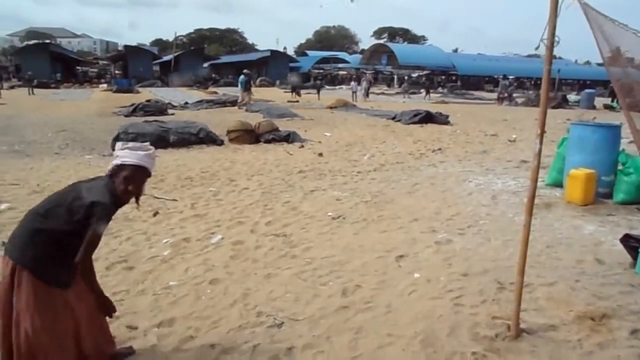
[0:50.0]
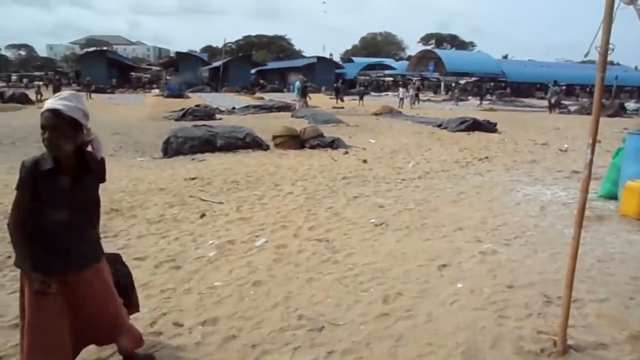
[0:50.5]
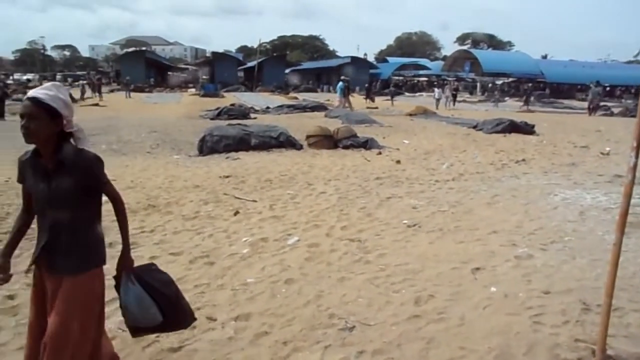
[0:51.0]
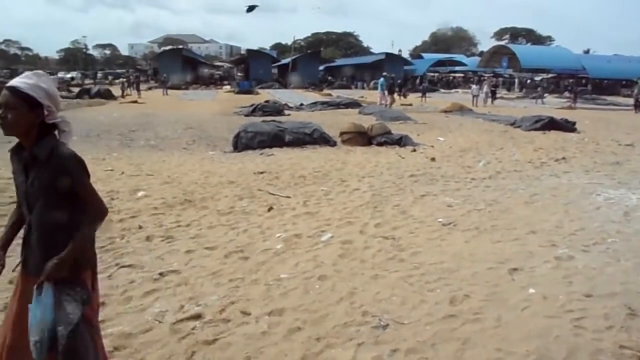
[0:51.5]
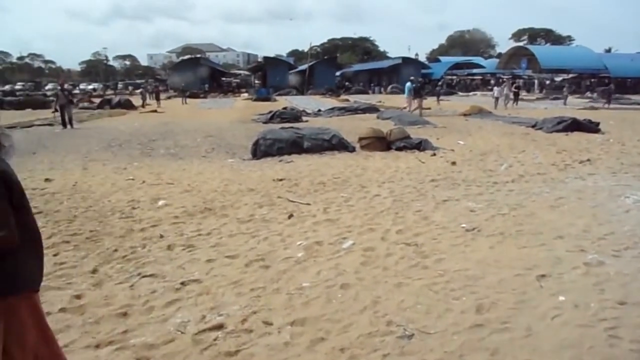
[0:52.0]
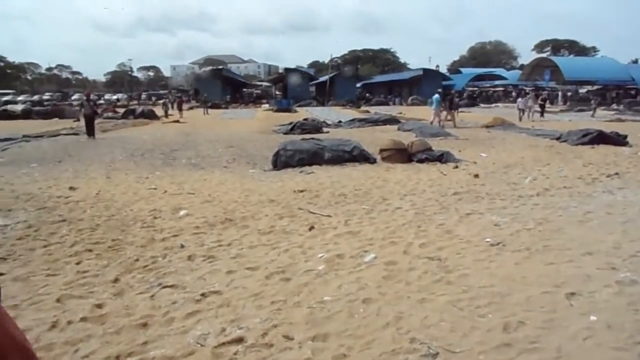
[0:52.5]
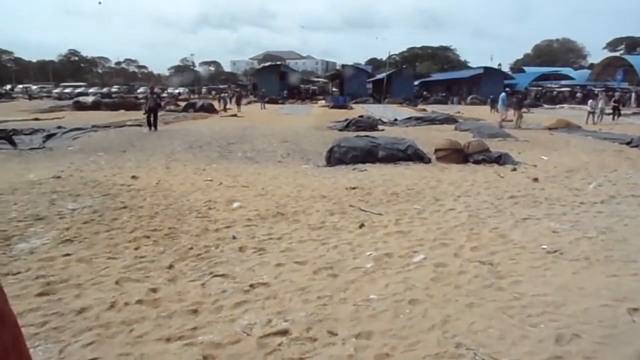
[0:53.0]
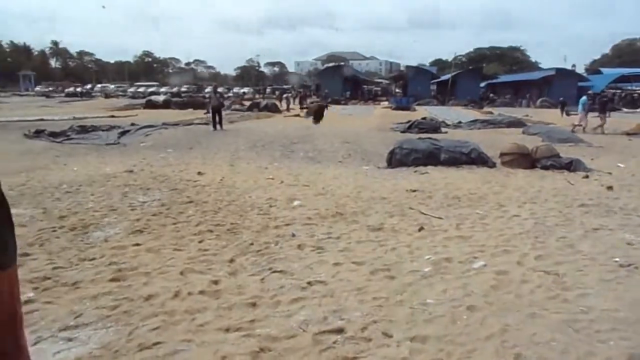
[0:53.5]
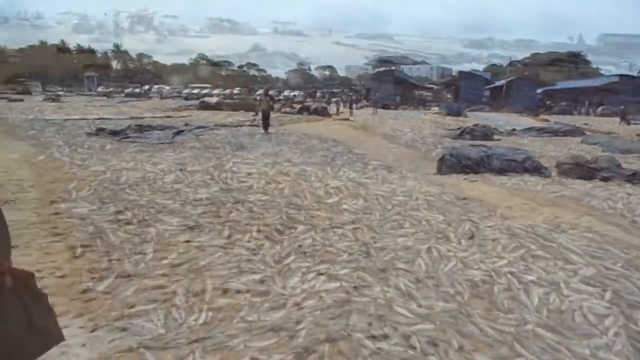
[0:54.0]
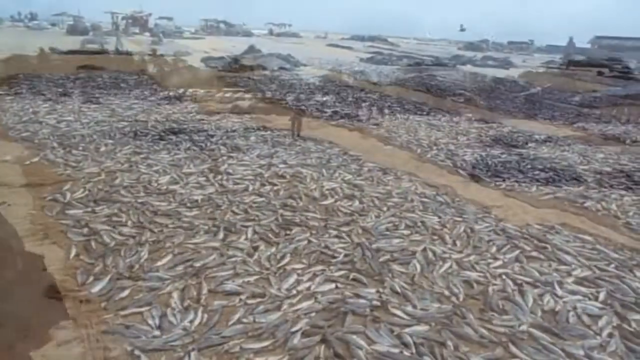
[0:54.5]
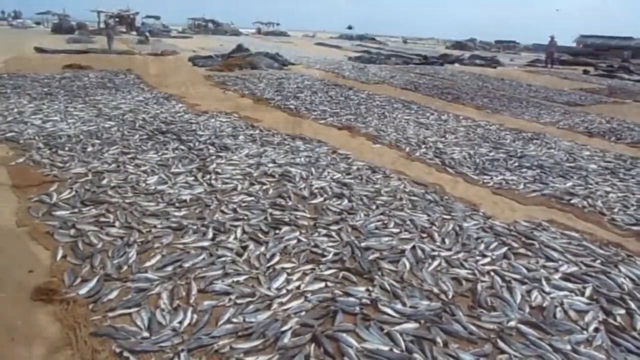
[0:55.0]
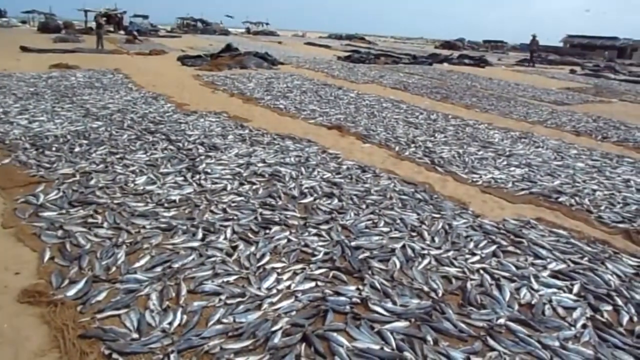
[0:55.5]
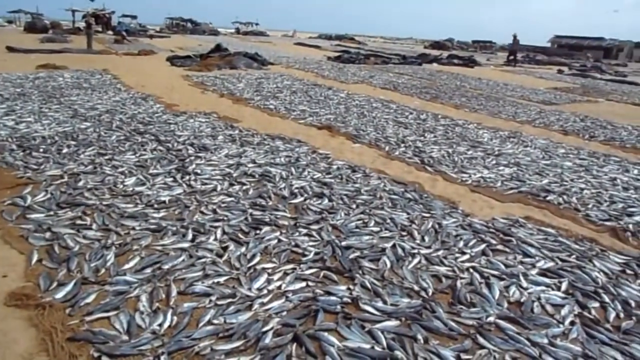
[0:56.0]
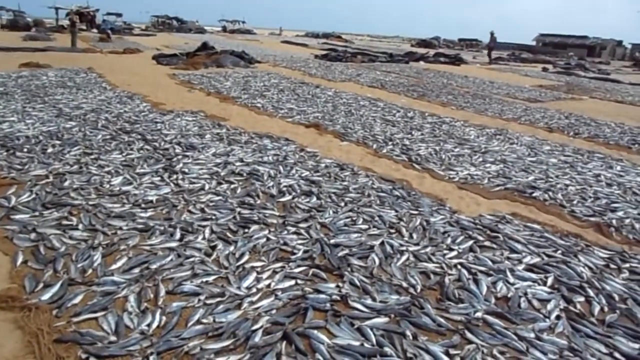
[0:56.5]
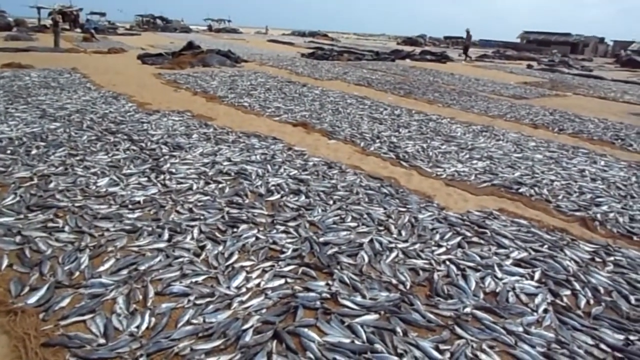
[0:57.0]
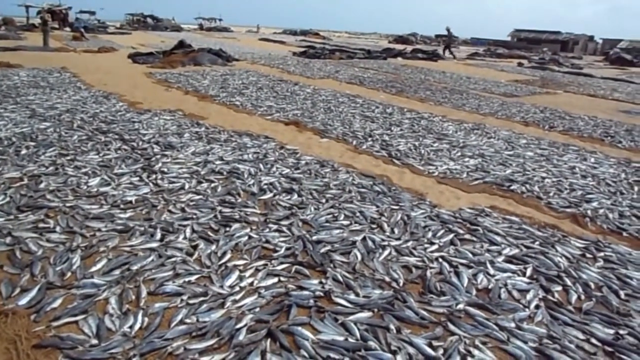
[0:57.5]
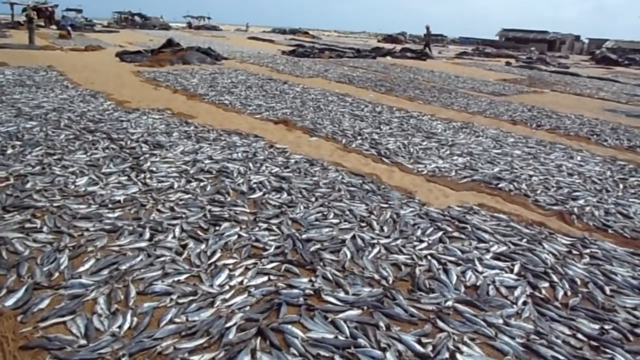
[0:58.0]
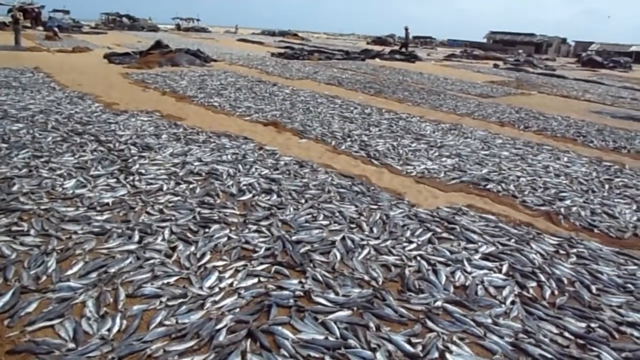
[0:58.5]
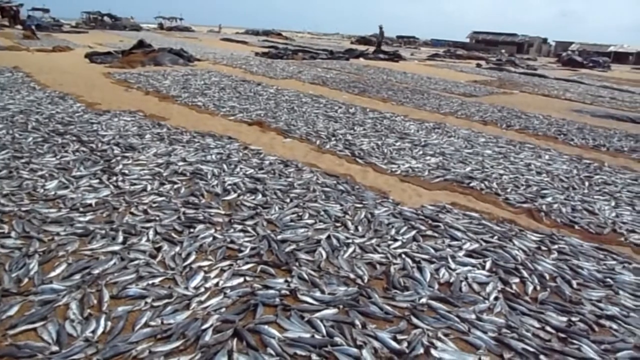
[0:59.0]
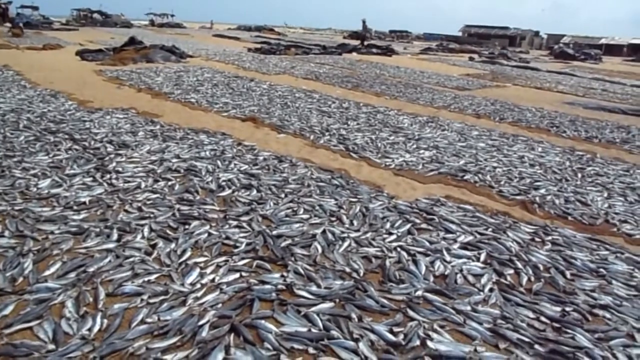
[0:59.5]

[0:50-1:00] The camera pans behind the fishing nets toward the area further inland, showing more of the beach and many people. In the distance is what looks like a very large parking lot full of cars. The scene fades to dozens of tarps laid out with thousands of fish on top of them in rows. It looks hot, and the fish appear to be drying out. They are small fish, maybe sardines or another smaller type, grayish, bluish and white under the sun, lying out in the sun. A few people walk between the rows.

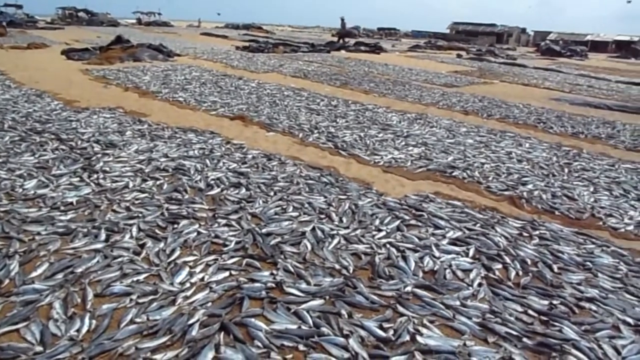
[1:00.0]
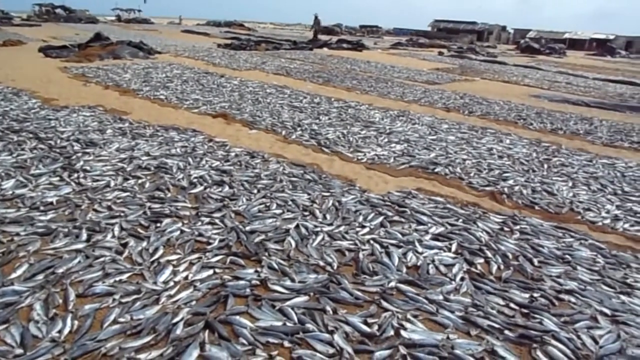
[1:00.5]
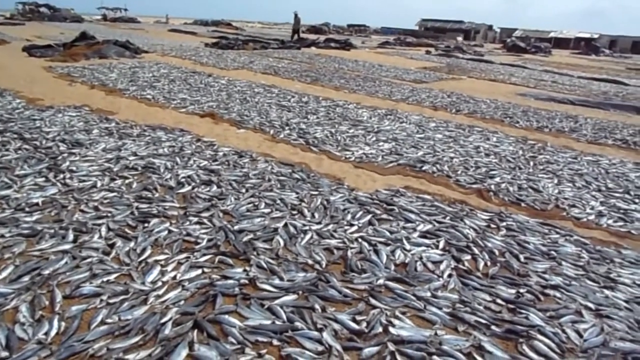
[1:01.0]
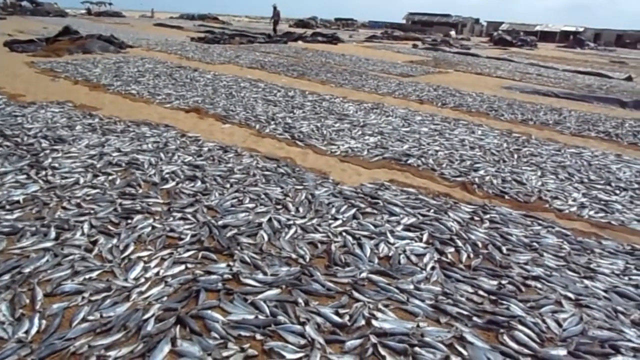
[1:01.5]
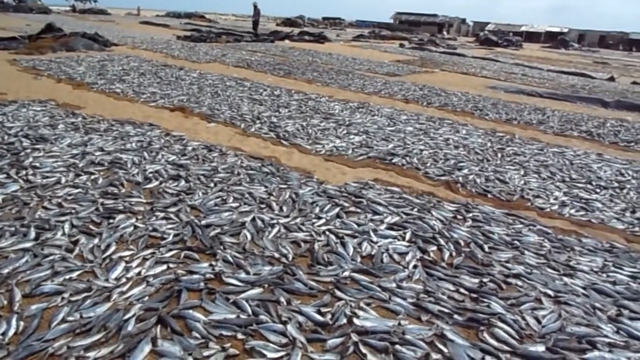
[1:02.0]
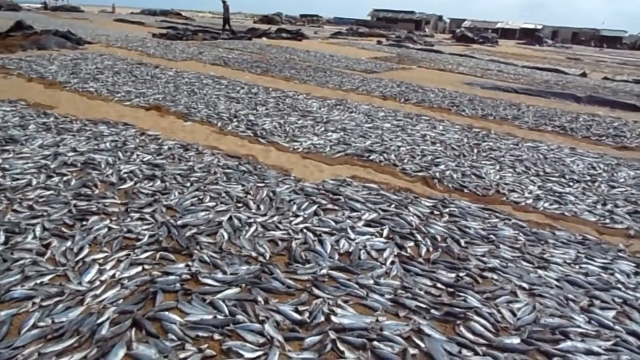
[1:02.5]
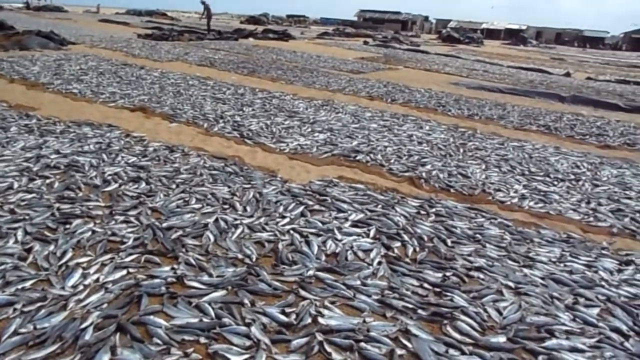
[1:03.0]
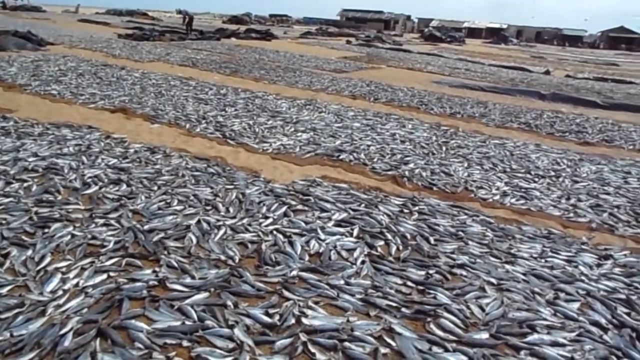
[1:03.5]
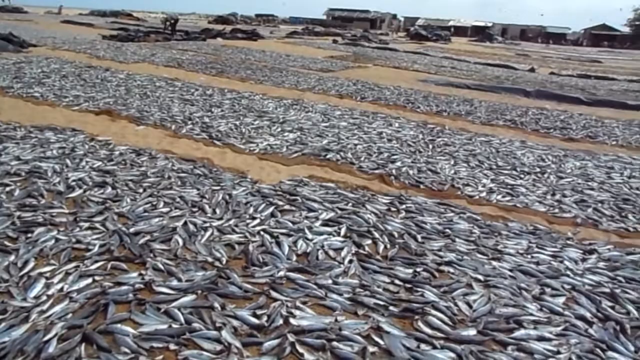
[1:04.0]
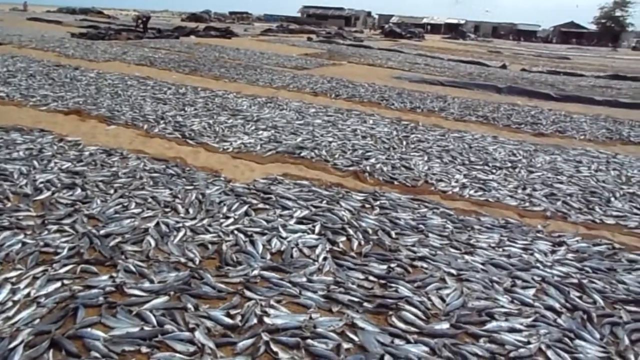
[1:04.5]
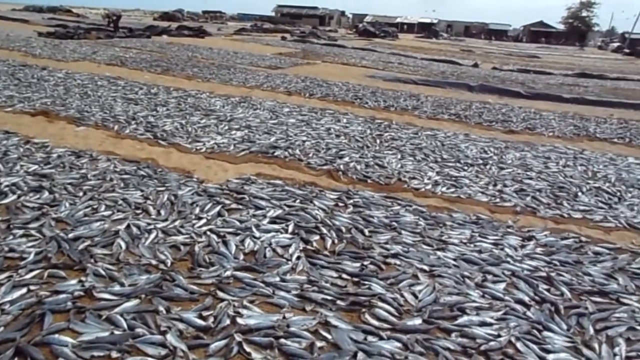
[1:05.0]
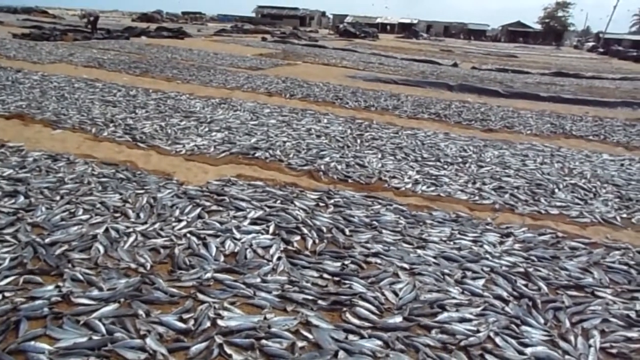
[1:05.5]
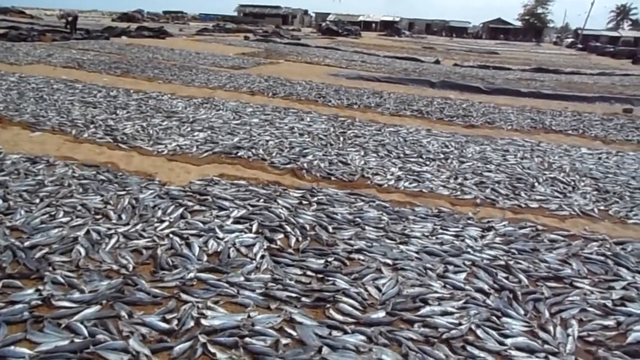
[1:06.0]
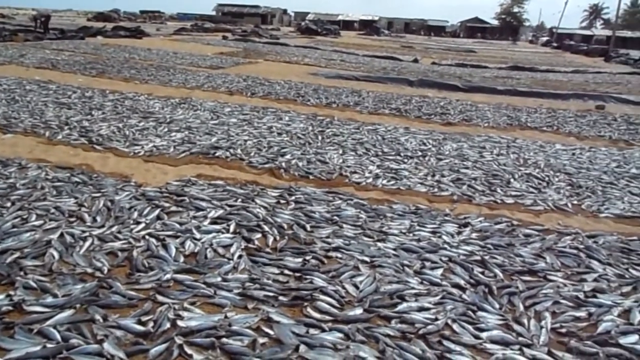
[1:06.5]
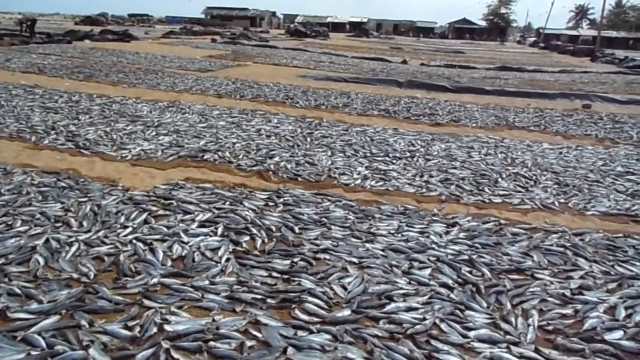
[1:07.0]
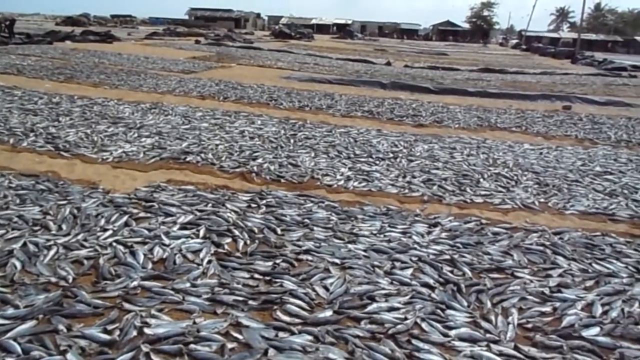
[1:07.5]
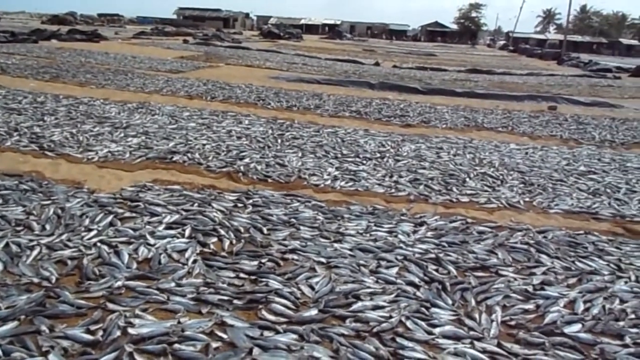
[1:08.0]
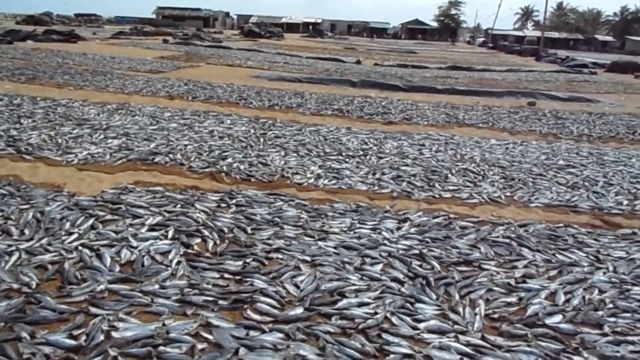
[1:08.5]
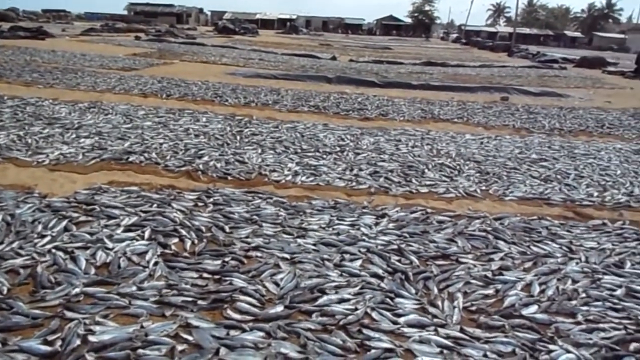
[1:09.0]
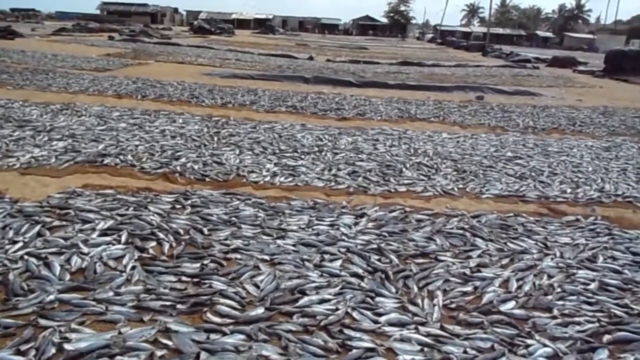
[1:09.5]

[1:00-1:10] Rows of fish lie out in the sun as the camera pans around. The rows are very long, probably at least a few meters, made of long pieces of tarp laid out in the sun. As the camera pans further, the tarps can be seen continuing into the distance, covering a large area of the tan-colored sand of the beach. Buildings are visible in the distance under a clear blue sky. The footage is quite low resolution, making details hard to make out.